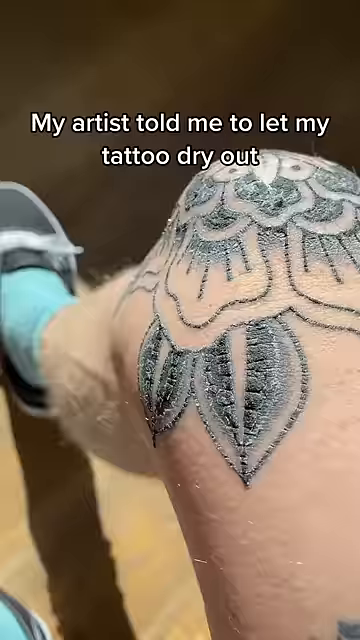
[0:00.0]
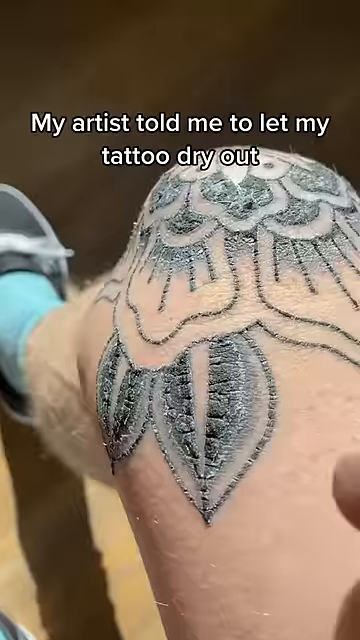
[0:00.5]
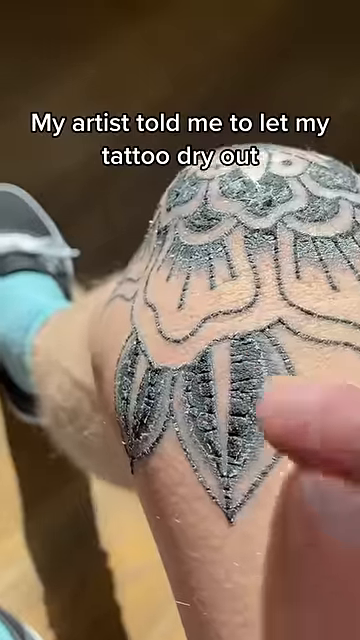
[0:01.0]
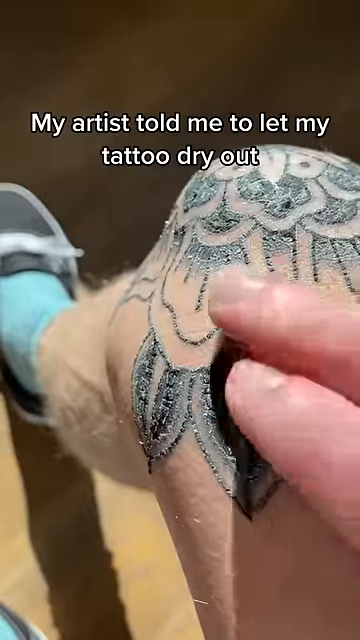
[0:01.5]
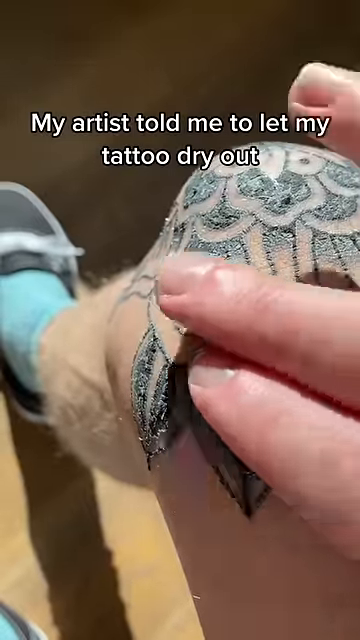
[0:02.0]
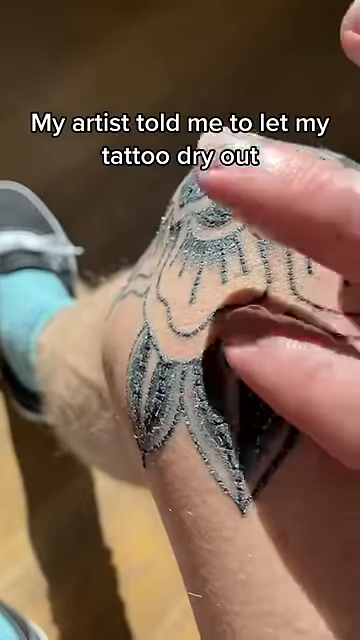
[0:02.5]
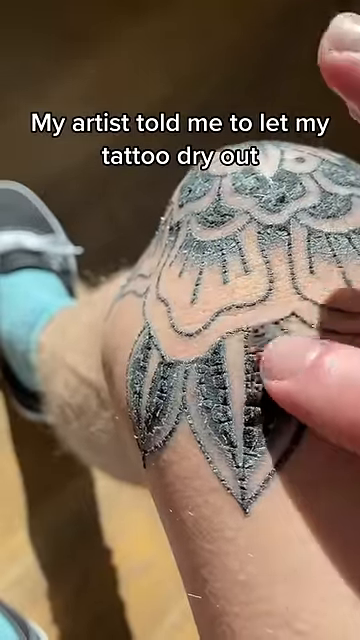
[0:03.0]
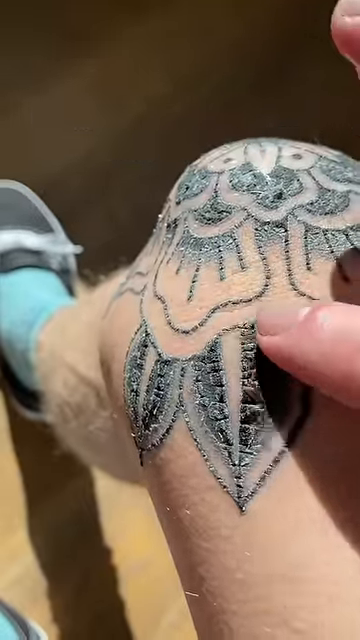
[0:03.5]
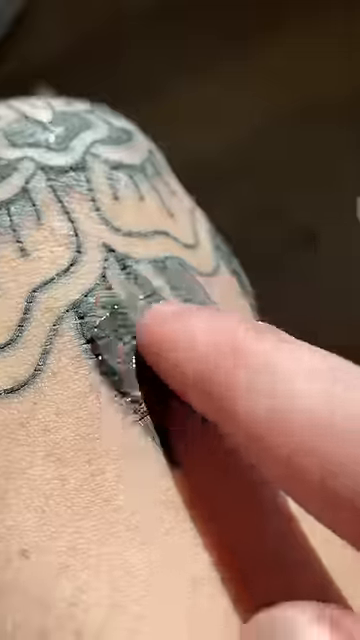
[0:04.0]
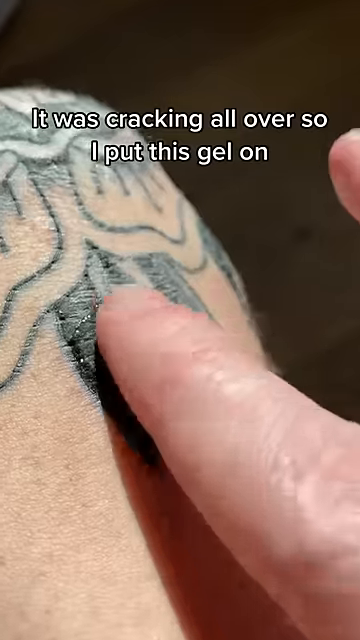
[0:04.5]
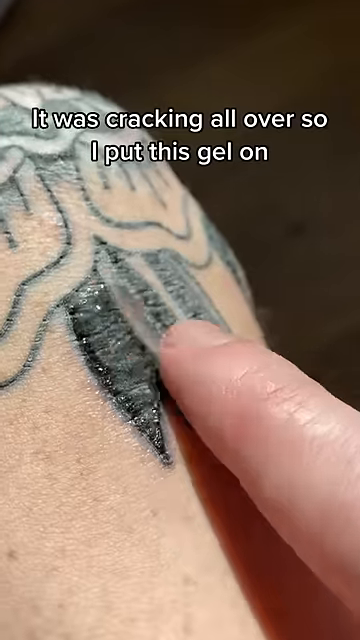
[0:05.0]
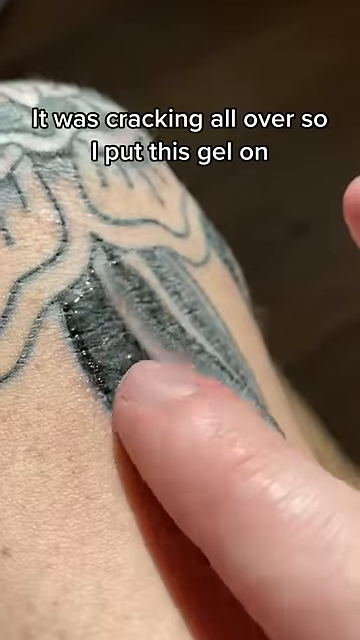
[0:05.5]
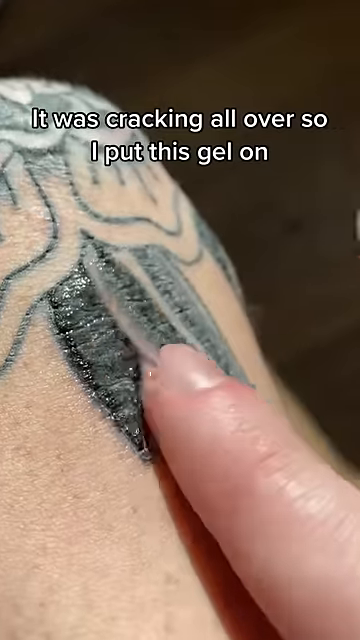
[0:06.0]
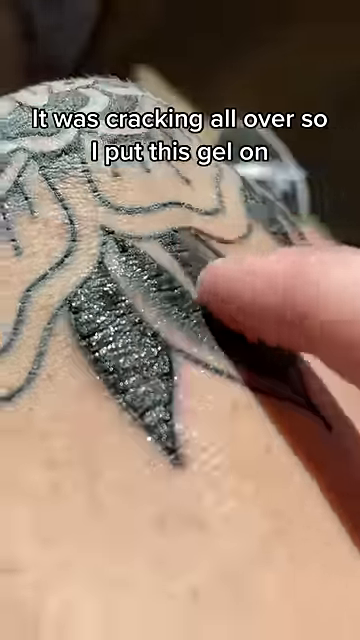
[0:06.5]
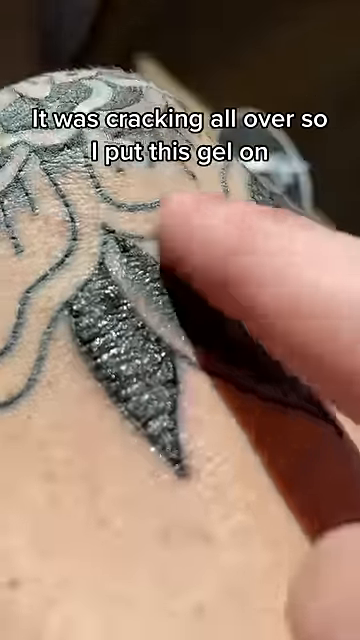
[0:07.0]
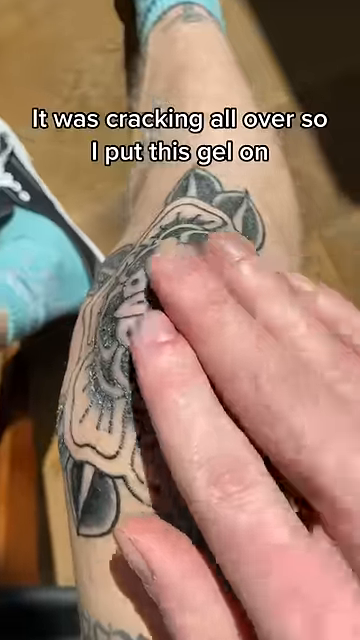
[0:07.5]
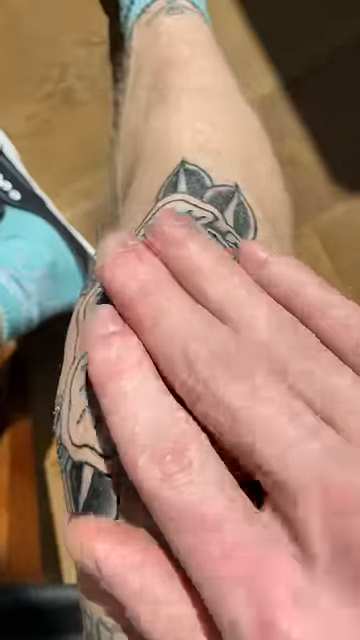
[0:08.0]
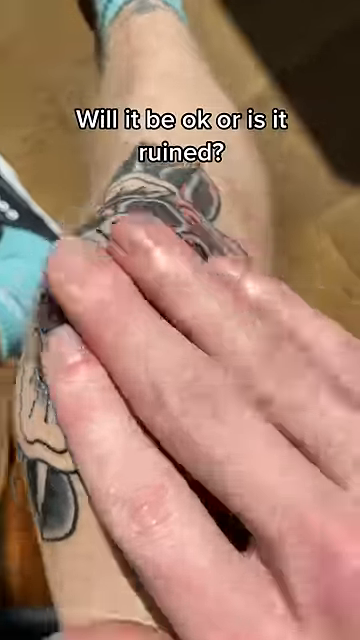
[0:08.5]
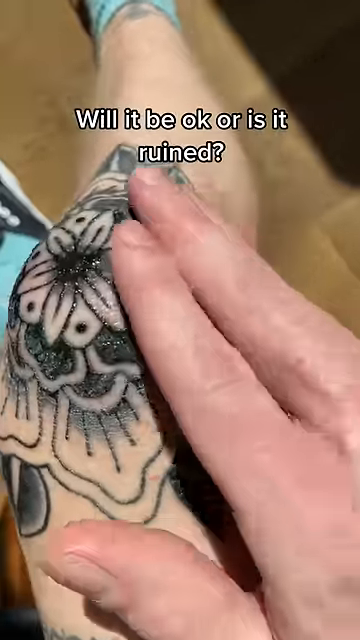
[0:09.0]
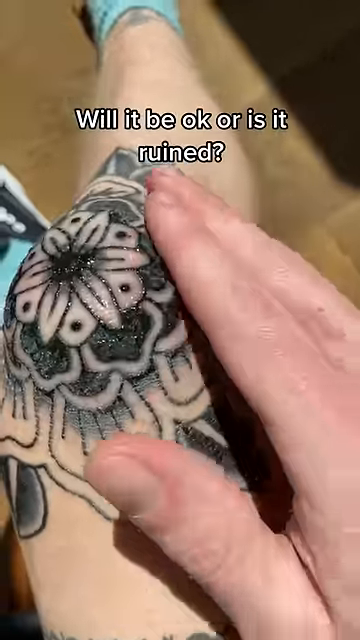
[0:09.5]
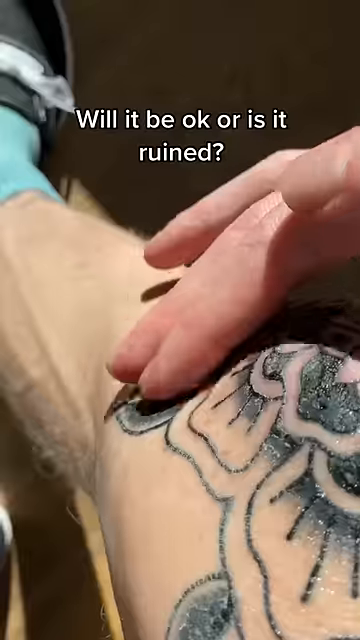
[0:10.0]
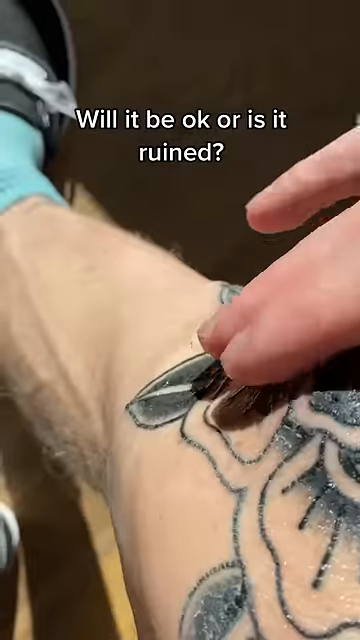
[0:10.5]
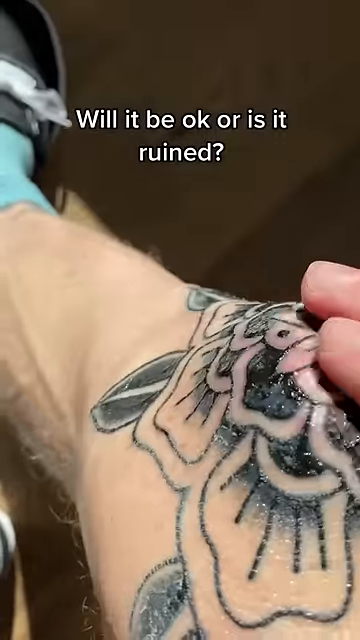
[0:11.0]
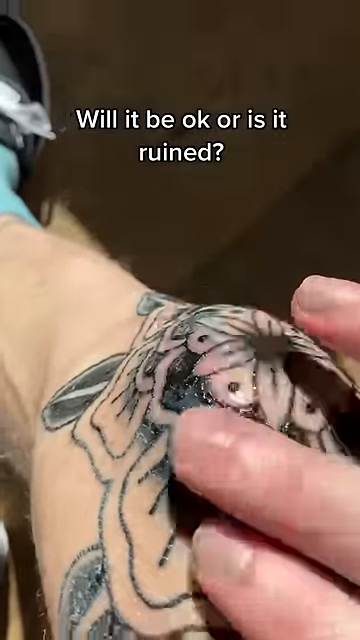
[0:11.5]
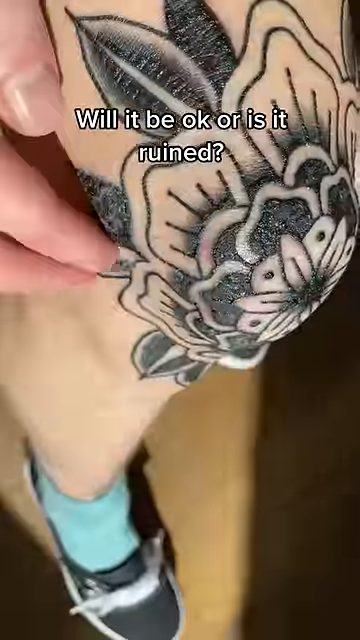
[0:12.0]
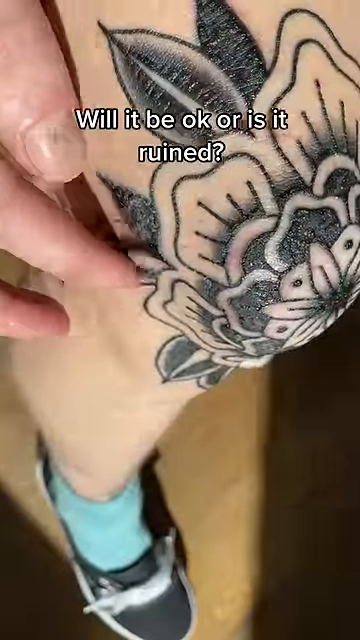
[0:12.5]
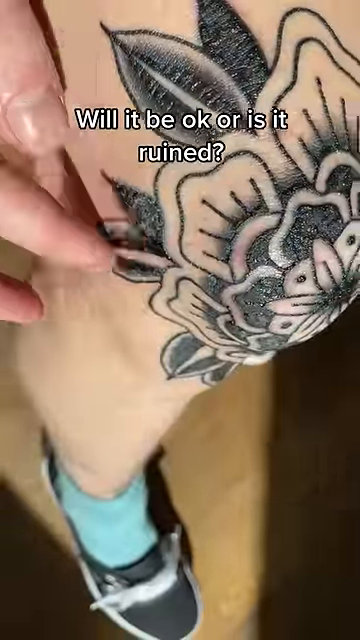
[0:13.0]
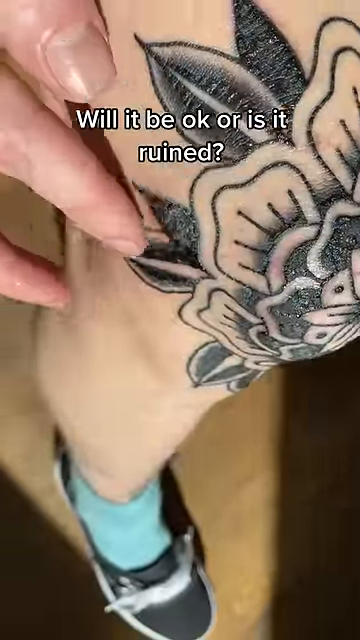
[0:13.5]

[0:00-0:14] The shot mainly shows a person's leg with a tattoo on the knee that looks like a floral design. Their fingers trace over the petals of the flowers as they rub an ointment onto the skin, apparently as a post-tattoo treatment. An overlay reads, "My artist told me to let my tattoo dry out. It was cracking all over, so I put this gel on." The hand rubs the gel all over the tattoo. The flower goes around the knee: the petals go around the kneecap, and the center circle of the flower is in the middle of the knee. The tattoo gets darker as the ointment is applied over the skin. He appears to be sitting indoors in a room, with a light illuminating the shadows around. He is wearing a shoe and a sock.